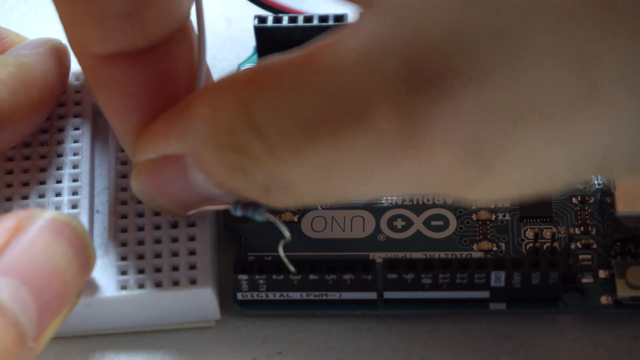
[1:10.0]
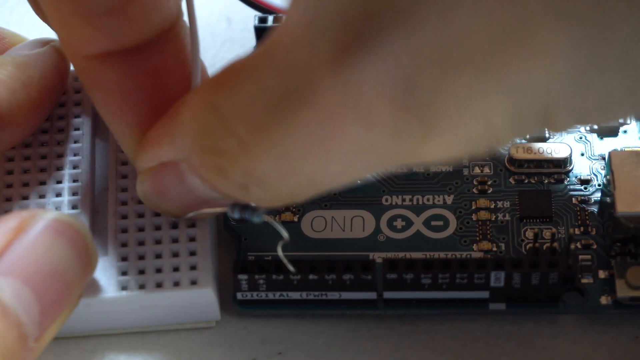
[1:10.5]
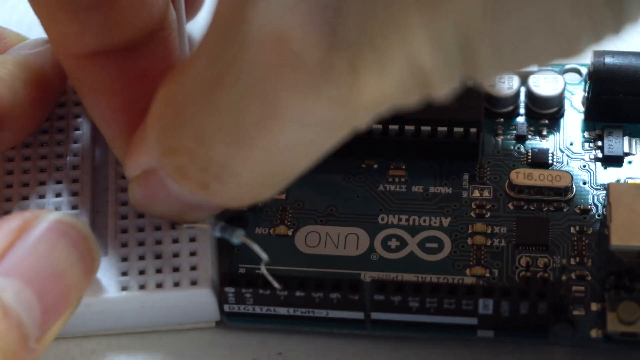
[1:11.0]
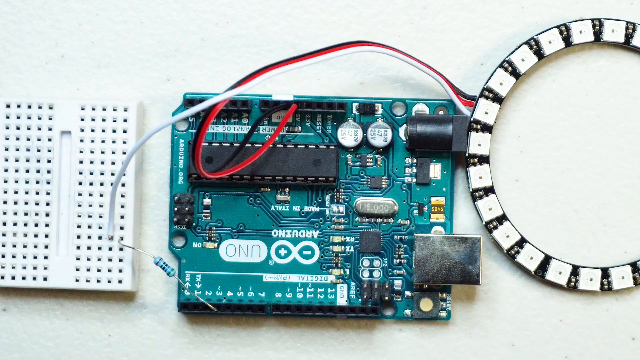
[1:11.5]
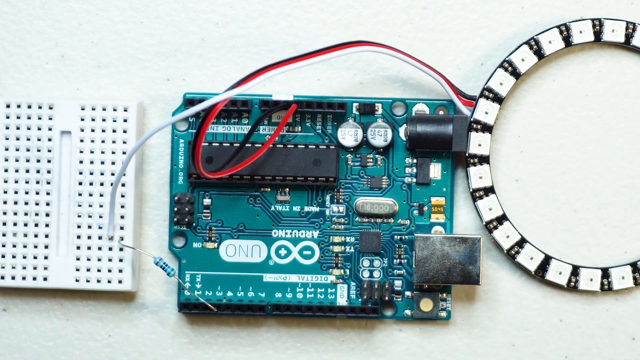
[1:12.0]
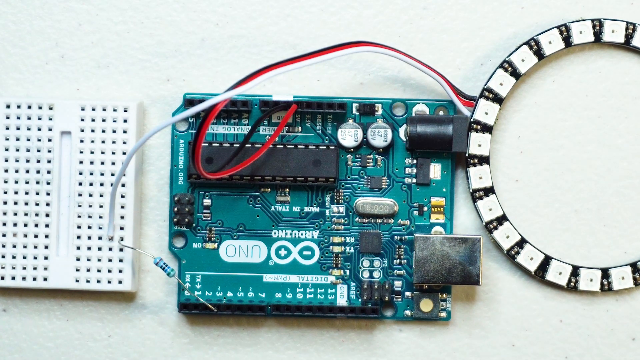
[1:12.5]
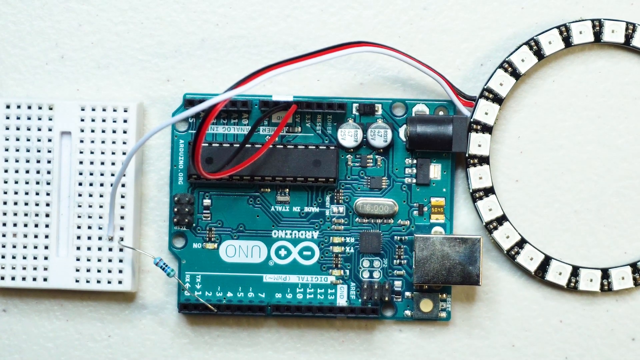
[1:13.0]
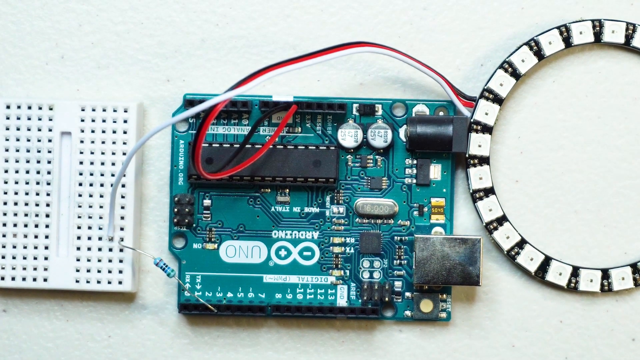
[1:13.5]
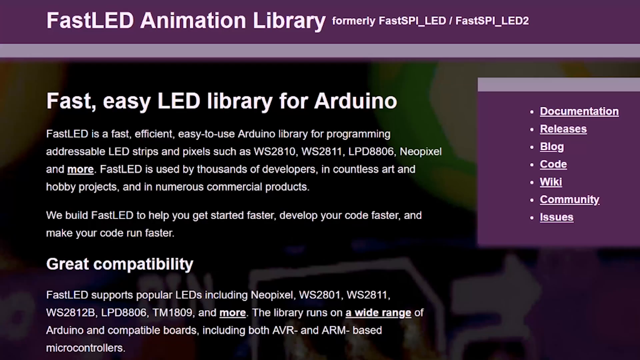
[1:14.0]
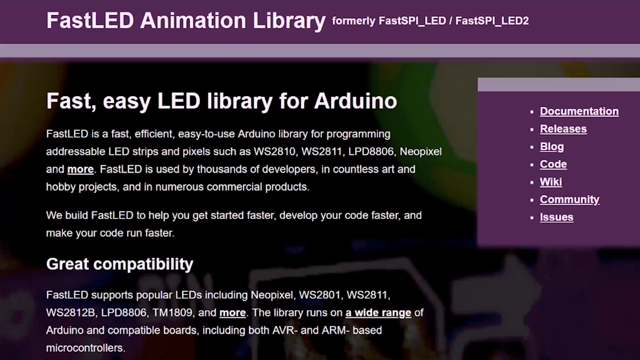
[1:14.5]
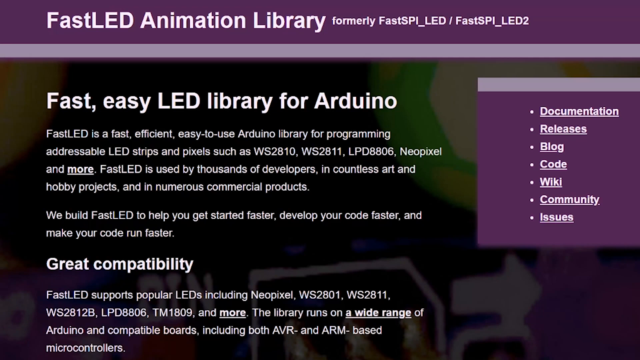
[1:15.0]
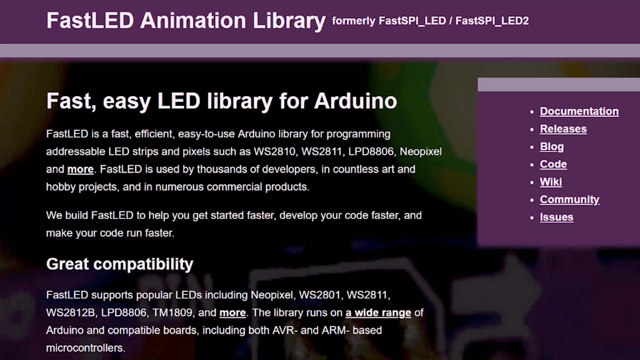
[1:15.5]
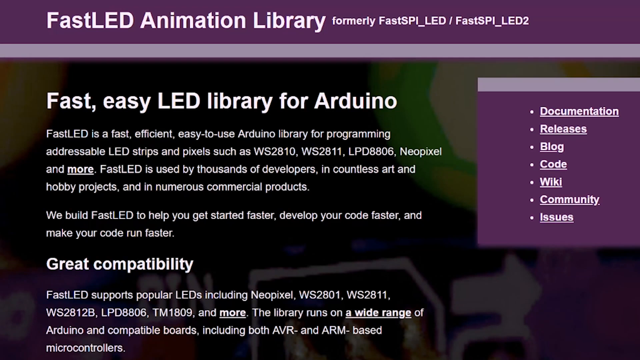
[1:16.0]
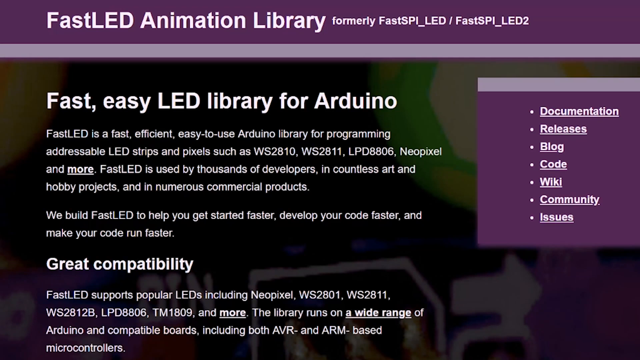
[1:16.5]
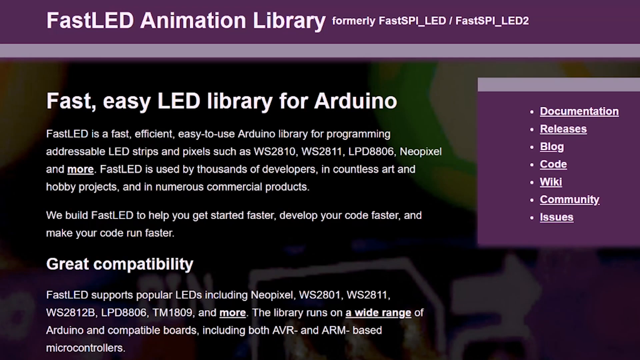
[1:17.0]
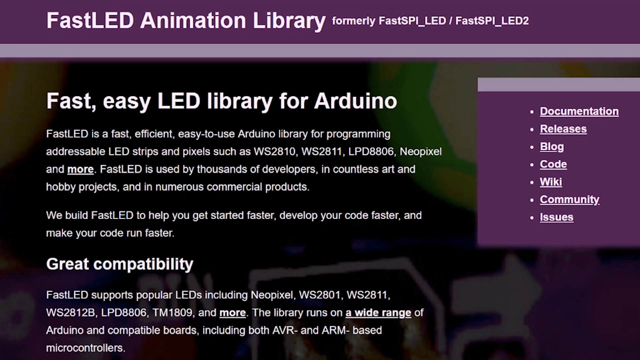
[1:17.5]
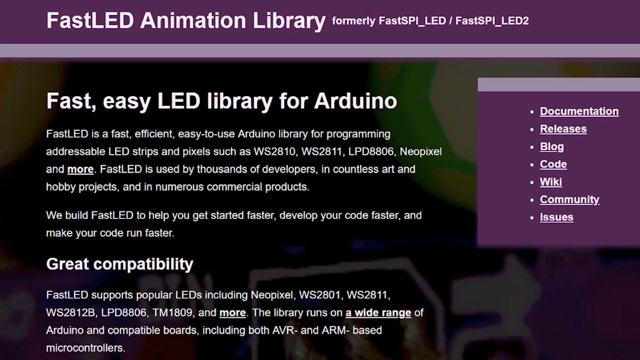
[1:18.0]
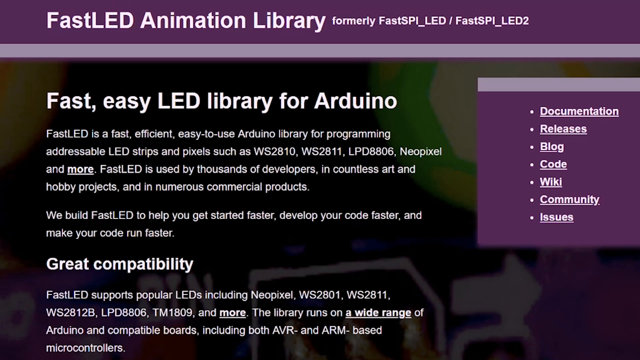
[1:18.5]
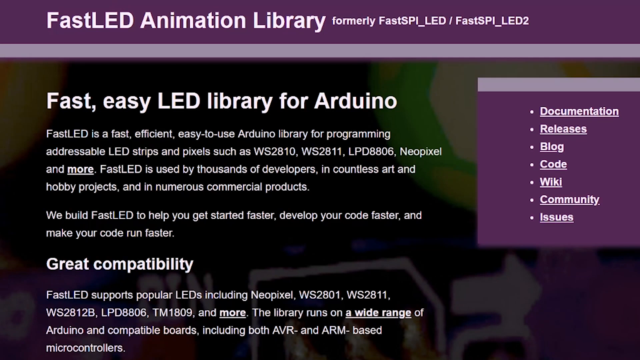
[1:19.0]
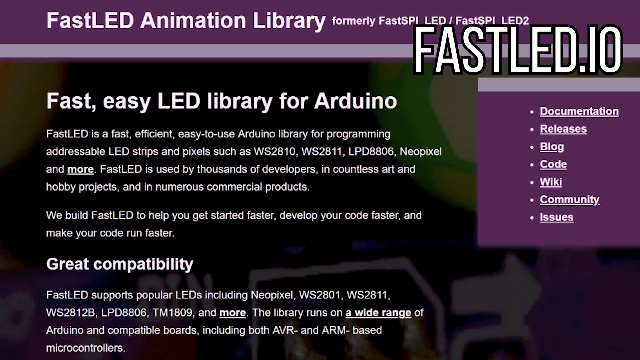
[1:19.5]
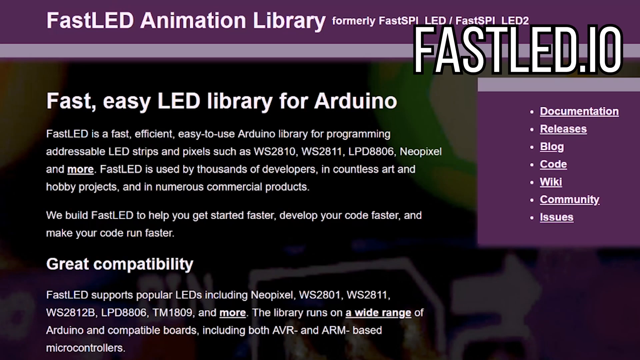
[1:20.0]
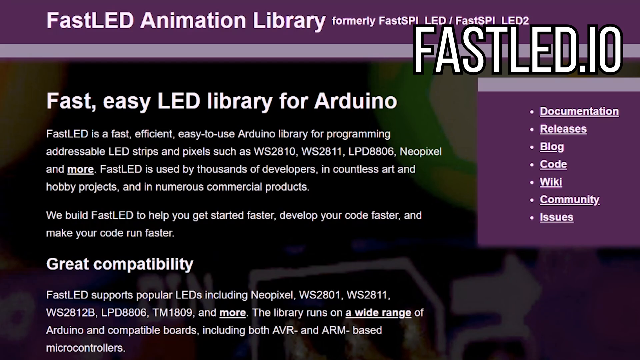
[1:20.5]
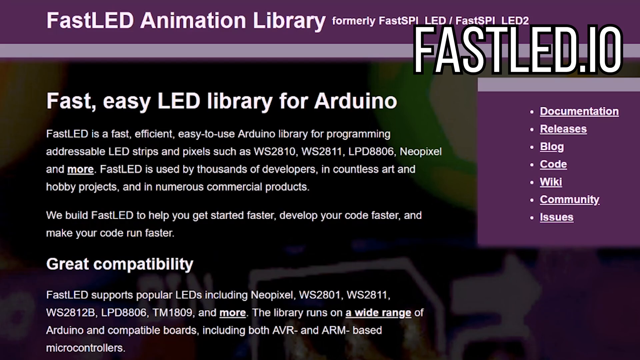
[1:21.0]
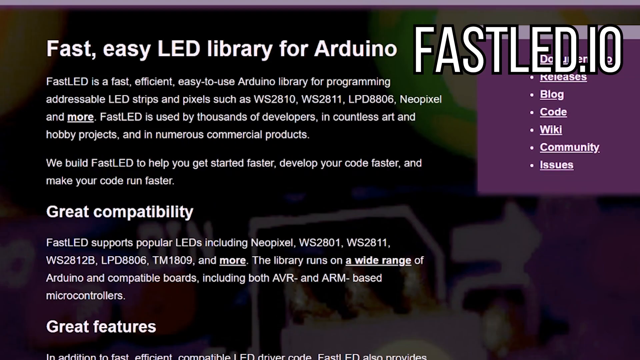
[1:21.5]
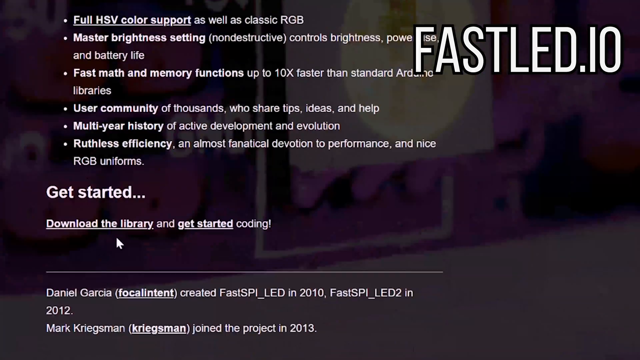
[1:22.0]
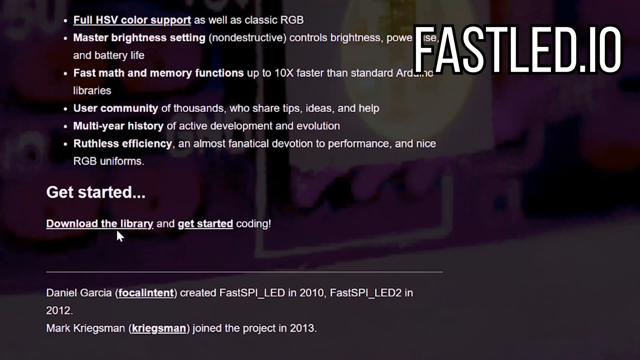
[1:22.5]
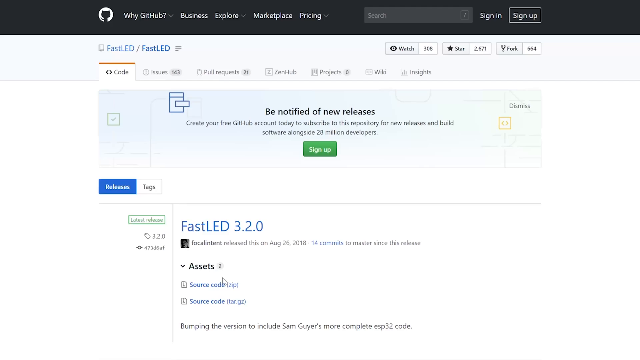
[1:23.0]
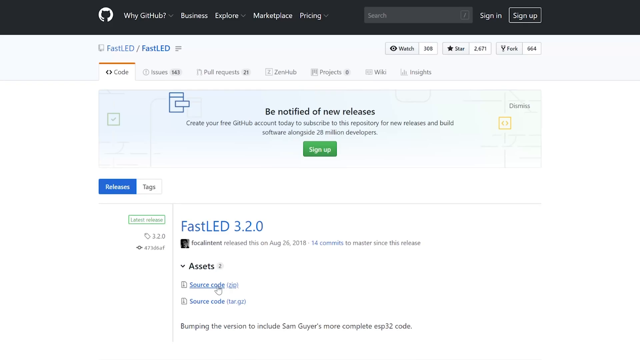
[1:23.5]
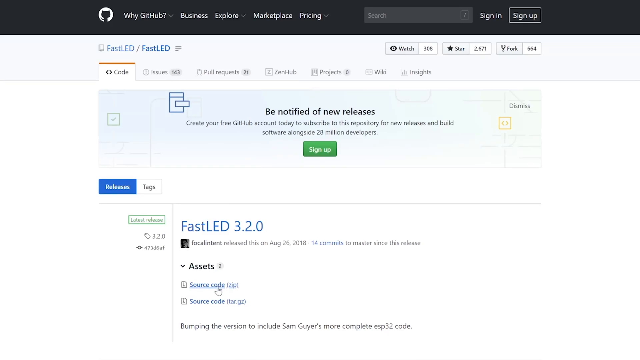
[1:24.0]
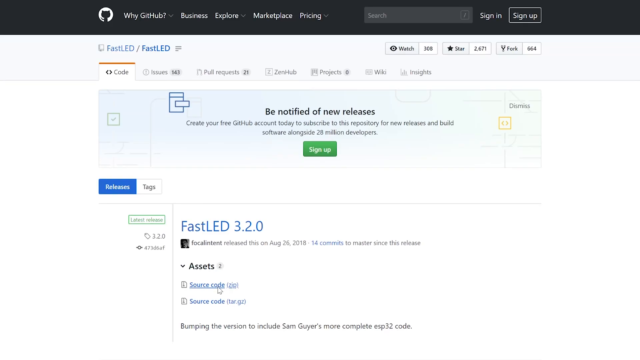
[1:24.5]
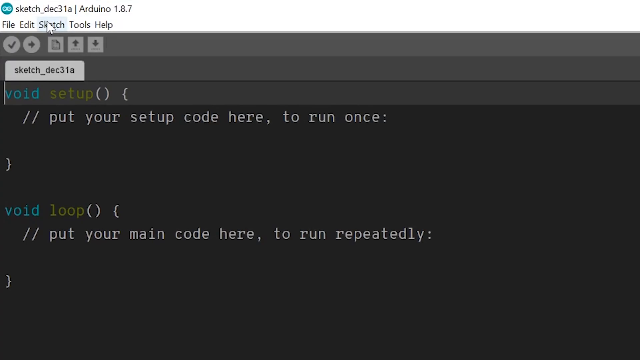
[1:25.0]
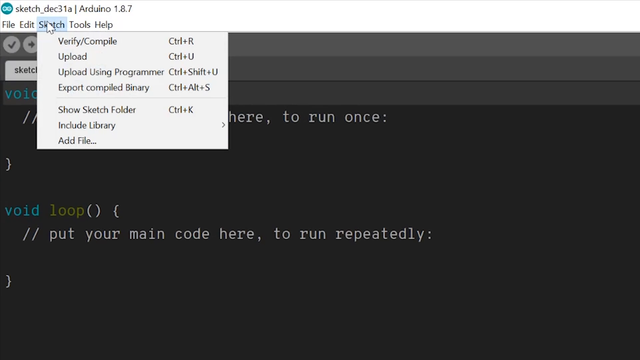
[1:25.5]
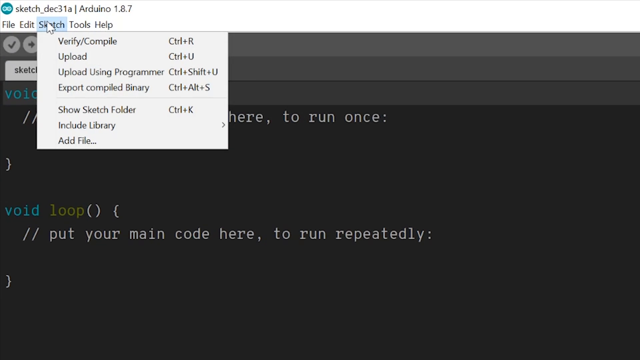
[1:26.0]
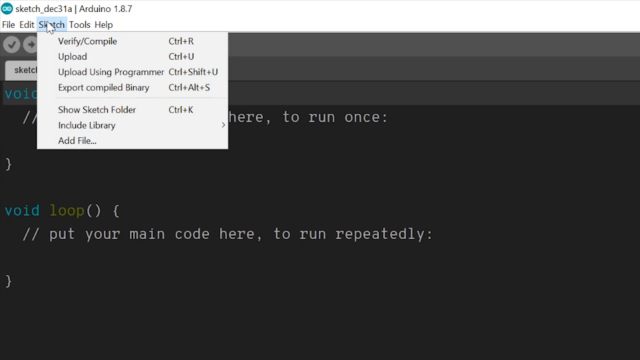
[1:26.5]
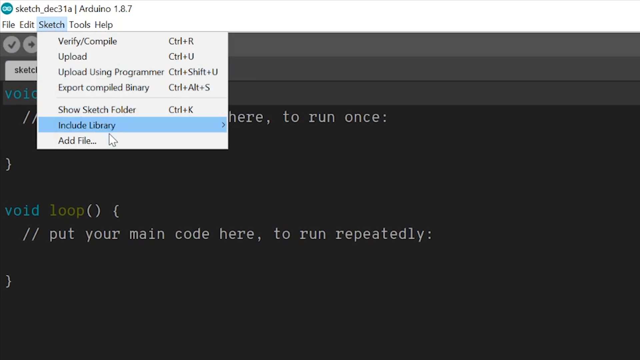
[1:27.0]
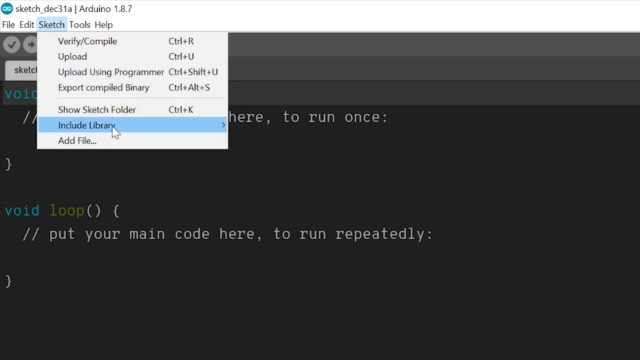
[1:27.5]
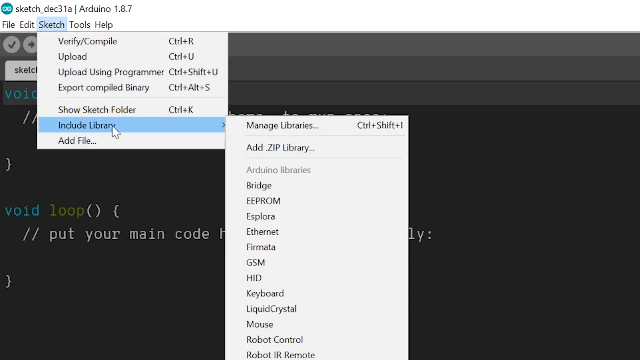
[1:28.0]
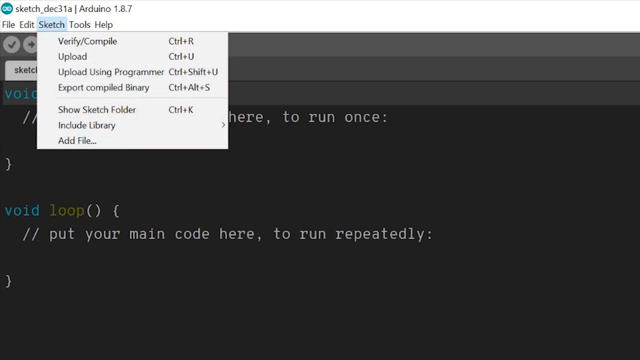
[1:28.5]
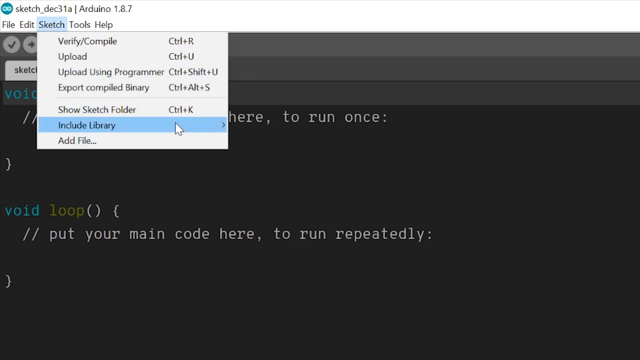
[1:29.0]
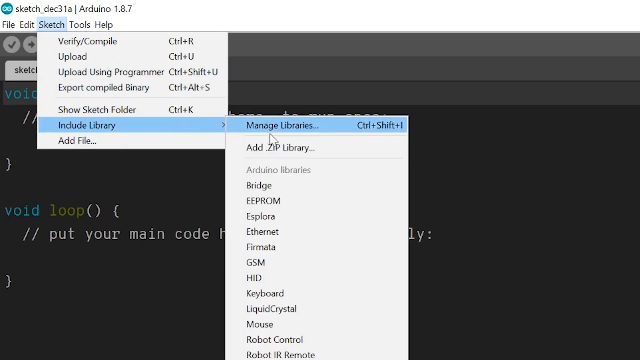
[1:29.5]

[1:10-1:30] In a first-person close-up, someone's right hand attaches a white wire coming from the top of the screen into one of the holes of the white rectangular object on the left of the screen. An overhead shot then shows three machines: on the left, the white rectangular object with holes, with a white wire extending to the third object; in the middle, a circuit board with red and black wires connecting it to the third object; and the third, a hollow circular disk with alternating white and black patterns on its front. A slide follows with the header "FastLED Animation Library," displaying information about the library for Arduino in its body. On the right is a menu showing documentation, releases, blog, code, wiki, community, and issues, and the background is black with some technology animations. Next, a GitHub page shows the repository for FastLED. Then a terminal shows two empty functions, void setup and void loop. He clicks the sketch drop-down menu at the top left, selects include library, and from another drop-down selects add zip library.